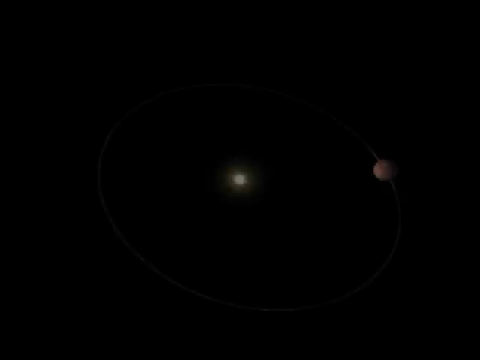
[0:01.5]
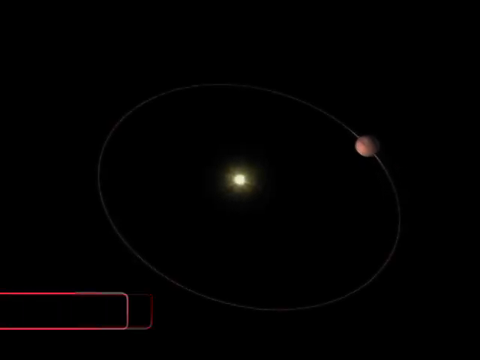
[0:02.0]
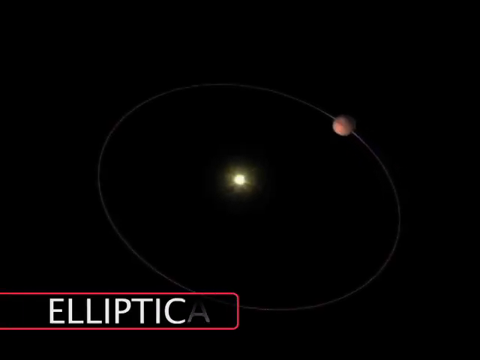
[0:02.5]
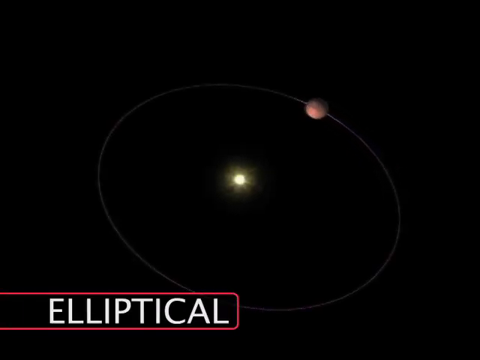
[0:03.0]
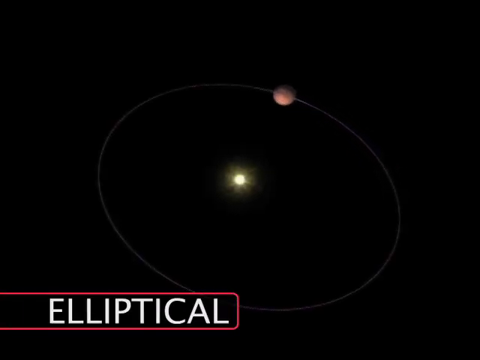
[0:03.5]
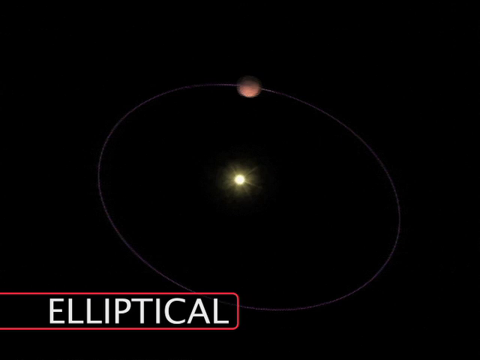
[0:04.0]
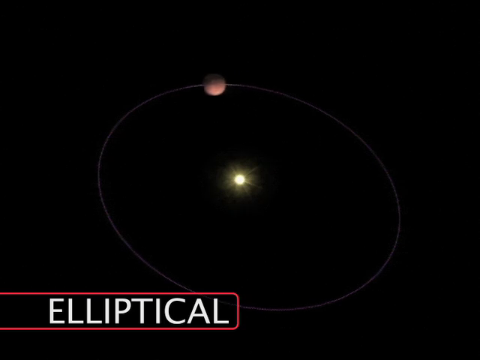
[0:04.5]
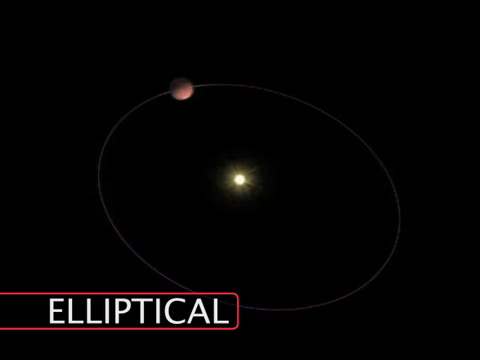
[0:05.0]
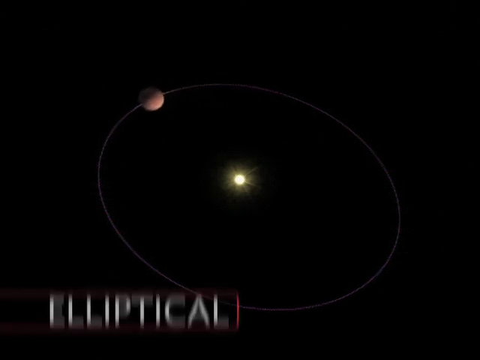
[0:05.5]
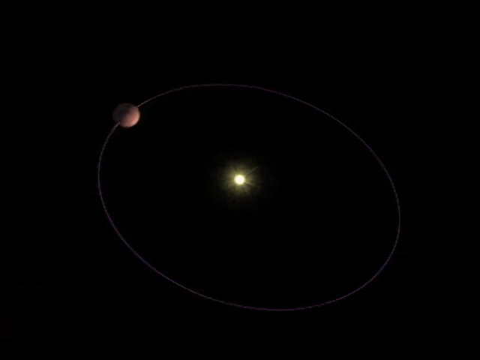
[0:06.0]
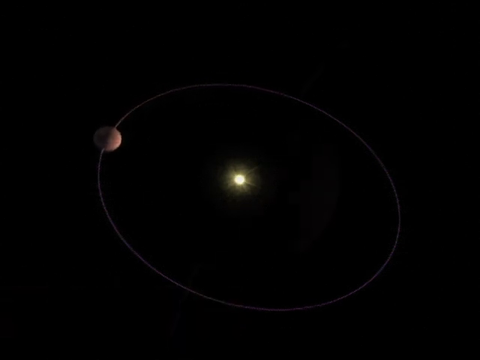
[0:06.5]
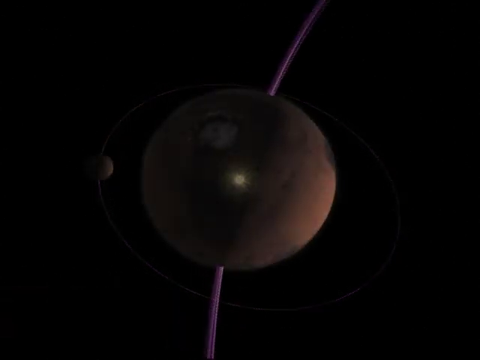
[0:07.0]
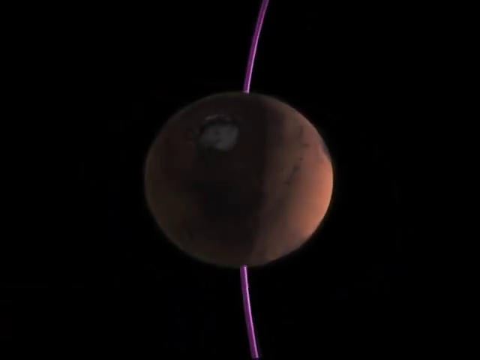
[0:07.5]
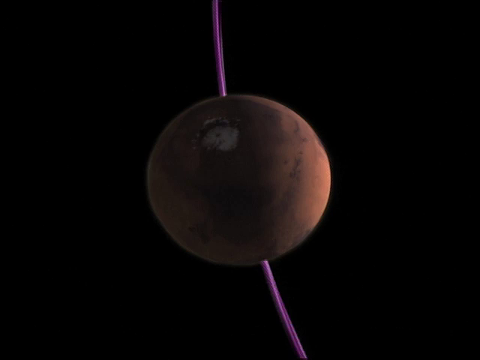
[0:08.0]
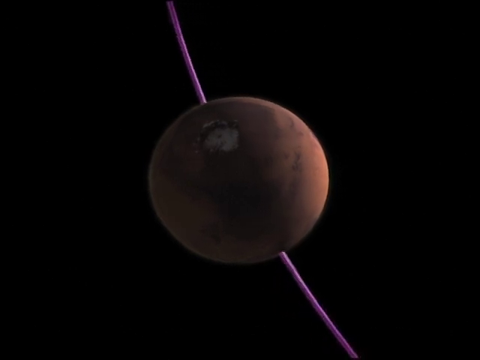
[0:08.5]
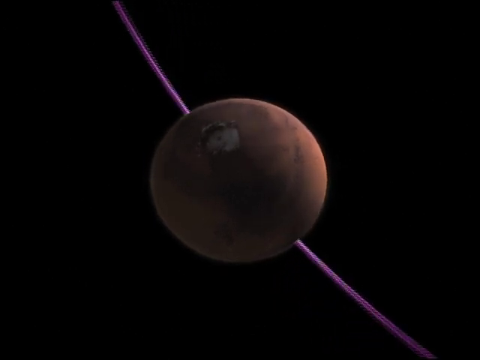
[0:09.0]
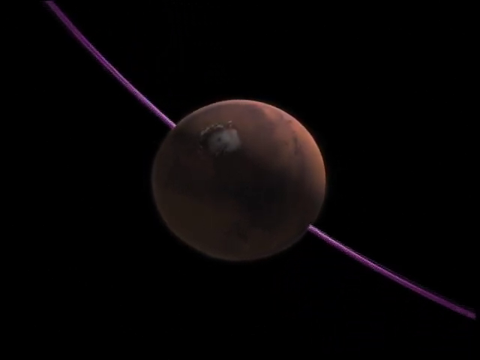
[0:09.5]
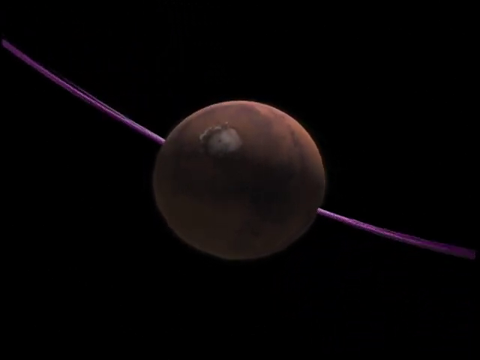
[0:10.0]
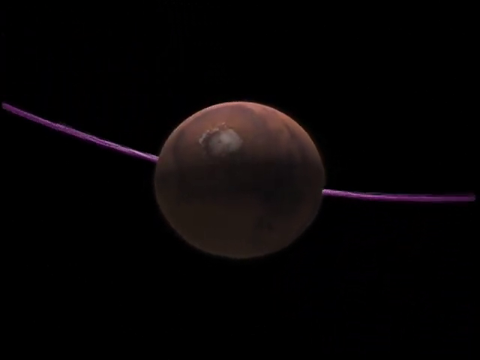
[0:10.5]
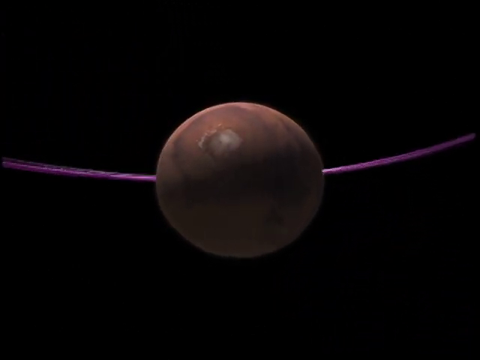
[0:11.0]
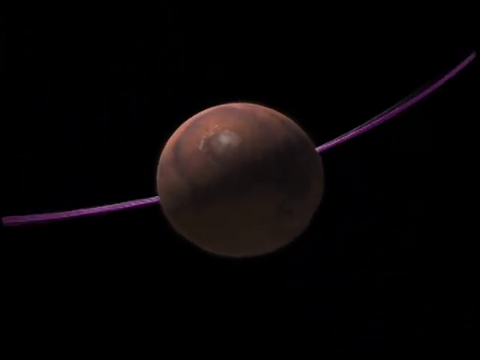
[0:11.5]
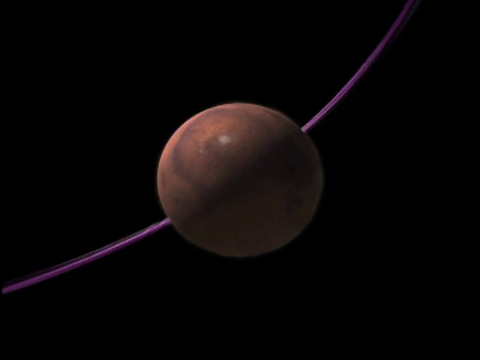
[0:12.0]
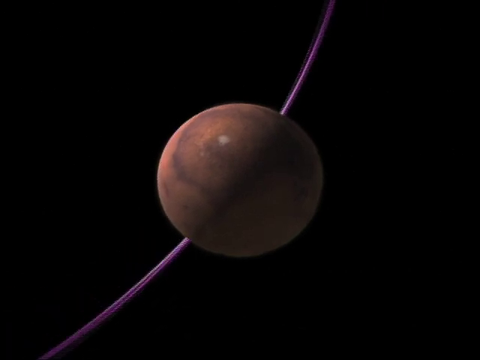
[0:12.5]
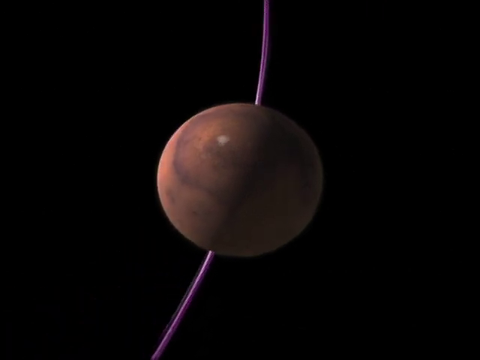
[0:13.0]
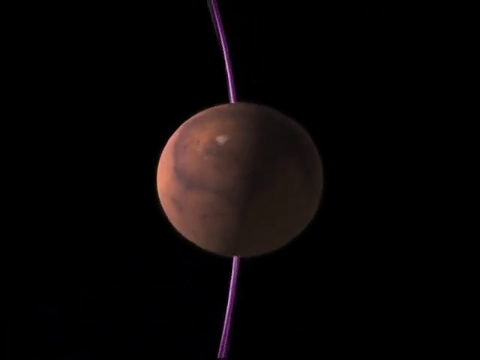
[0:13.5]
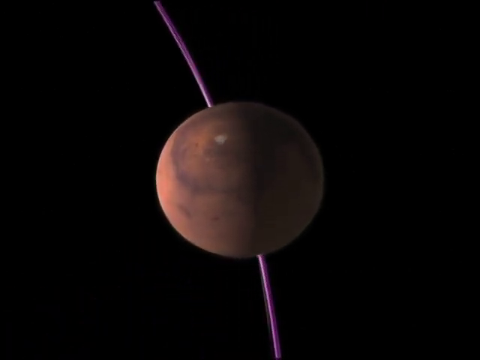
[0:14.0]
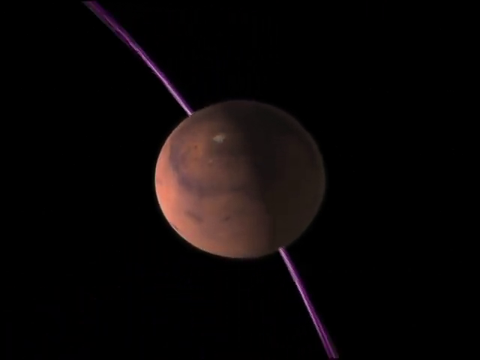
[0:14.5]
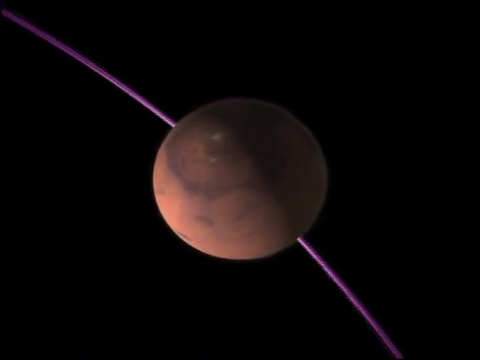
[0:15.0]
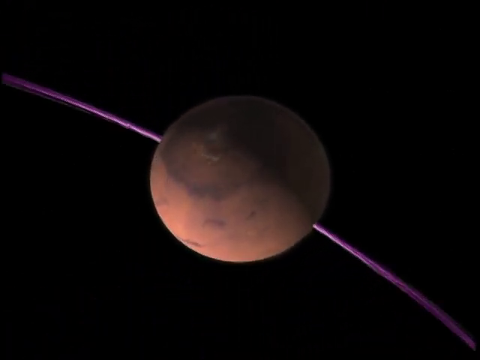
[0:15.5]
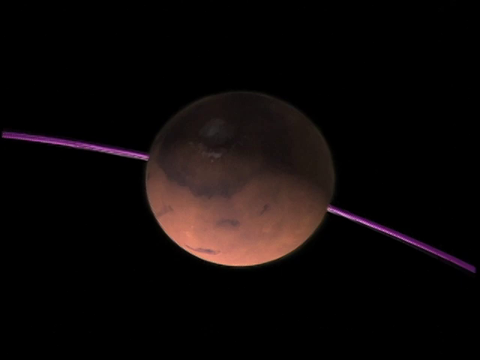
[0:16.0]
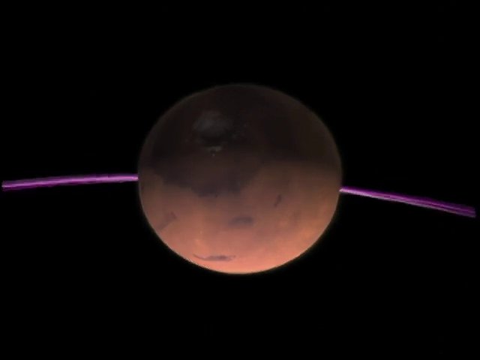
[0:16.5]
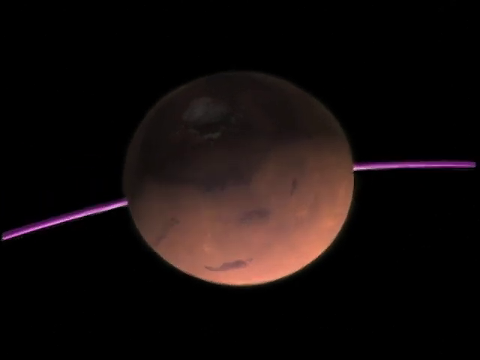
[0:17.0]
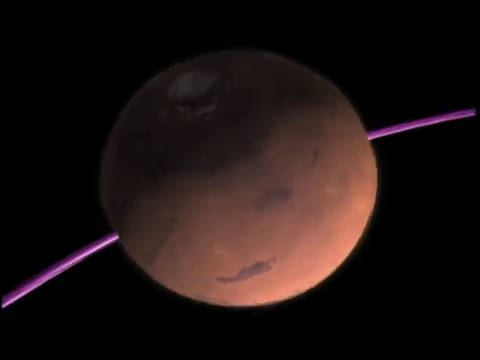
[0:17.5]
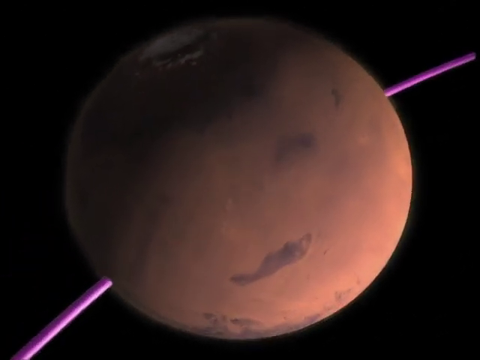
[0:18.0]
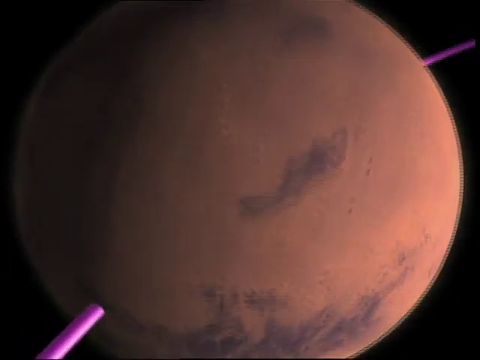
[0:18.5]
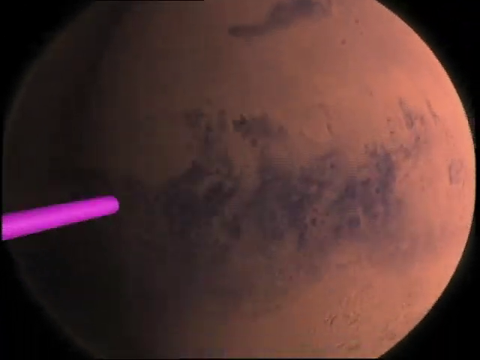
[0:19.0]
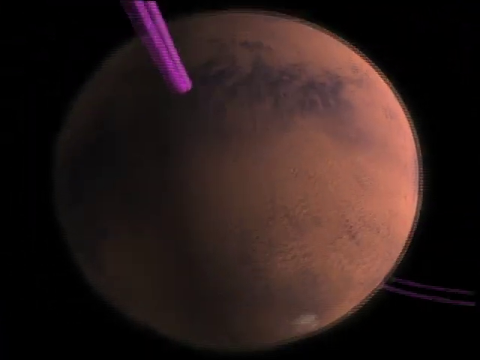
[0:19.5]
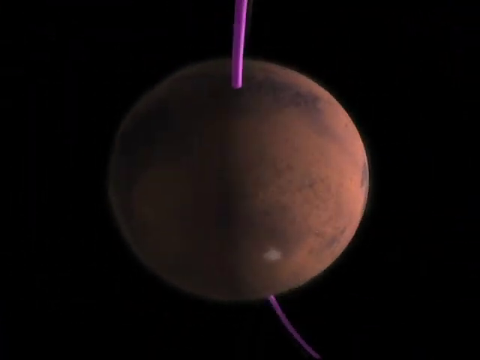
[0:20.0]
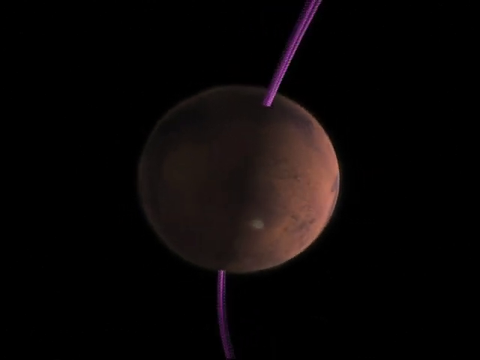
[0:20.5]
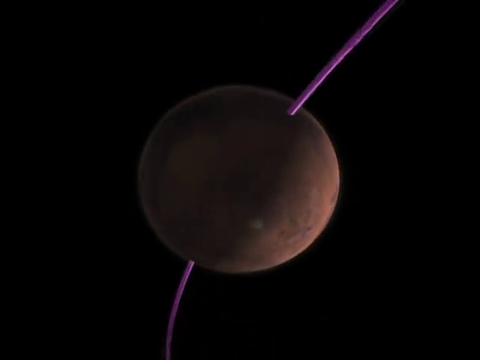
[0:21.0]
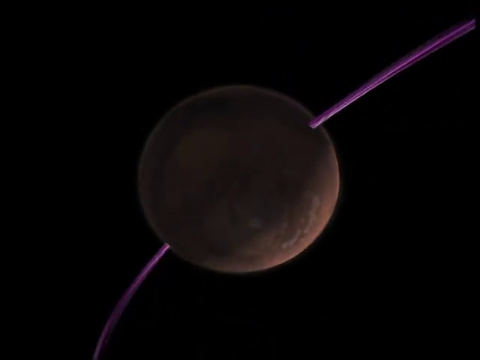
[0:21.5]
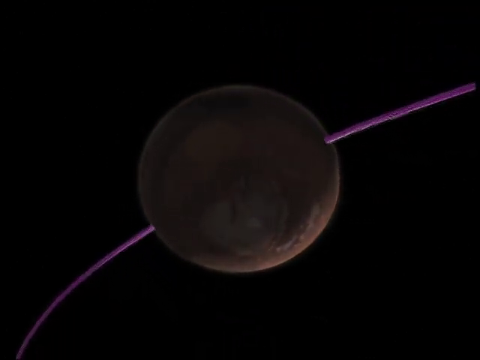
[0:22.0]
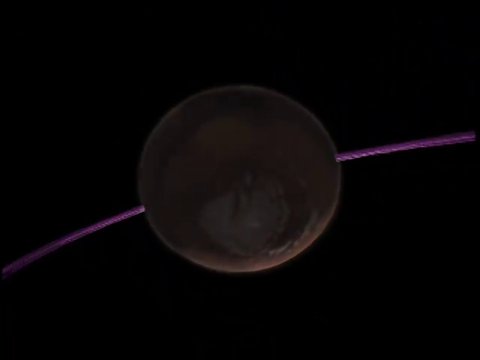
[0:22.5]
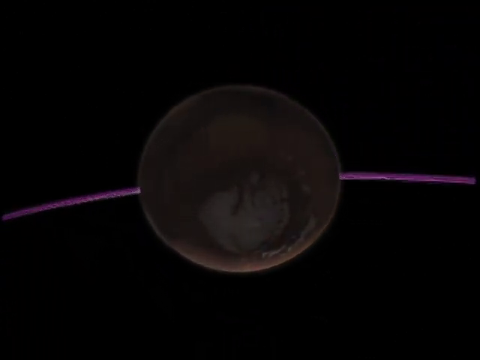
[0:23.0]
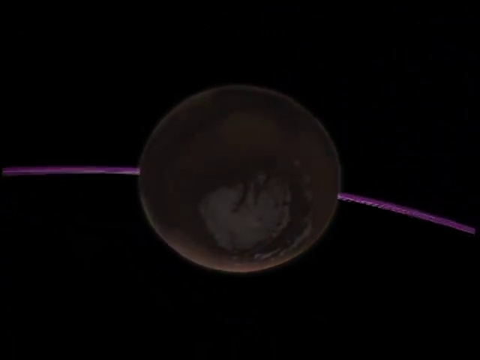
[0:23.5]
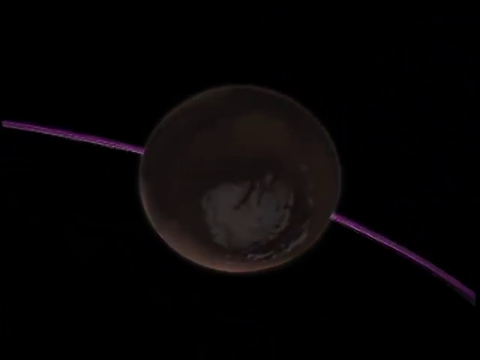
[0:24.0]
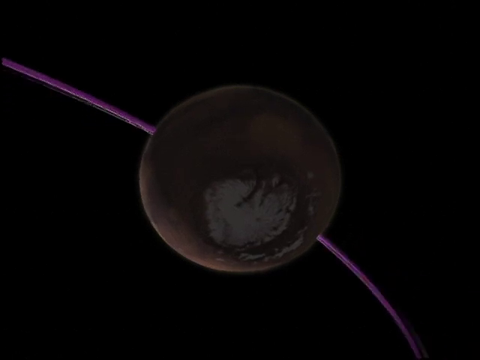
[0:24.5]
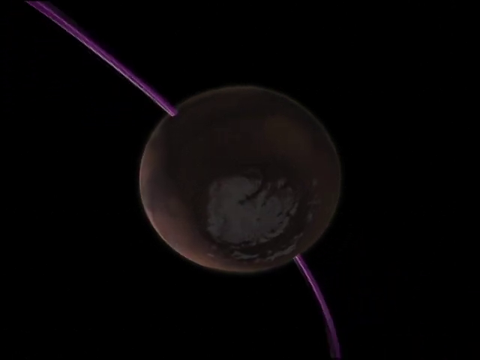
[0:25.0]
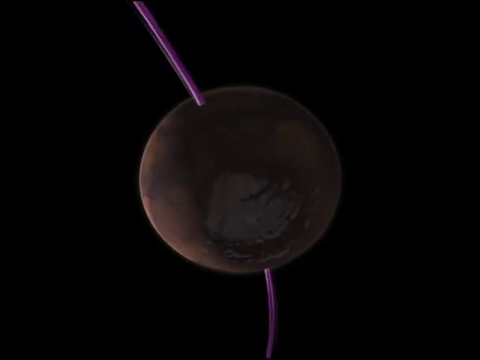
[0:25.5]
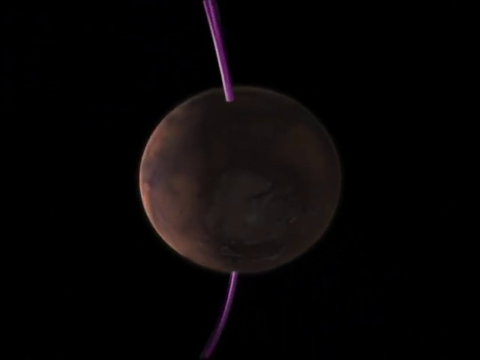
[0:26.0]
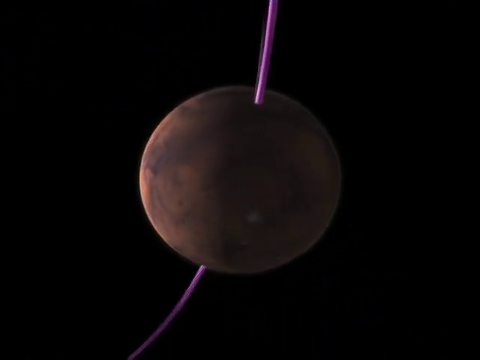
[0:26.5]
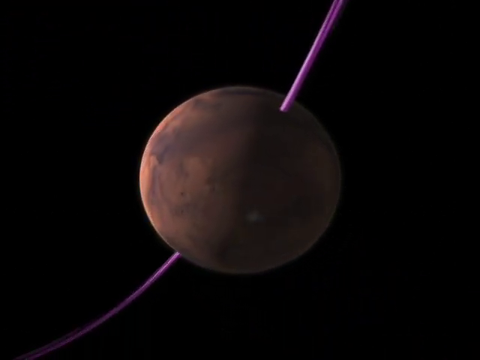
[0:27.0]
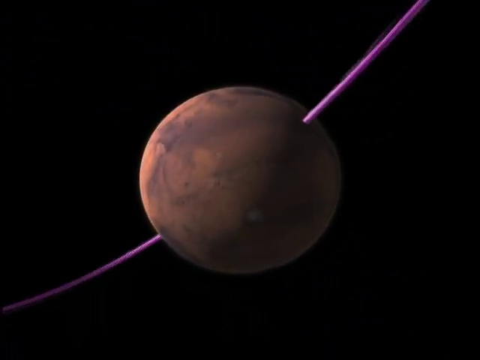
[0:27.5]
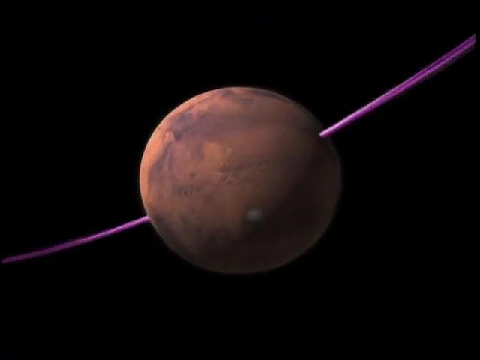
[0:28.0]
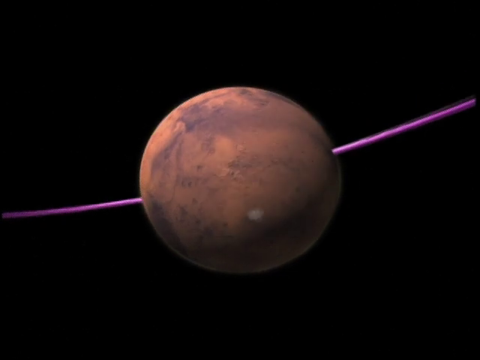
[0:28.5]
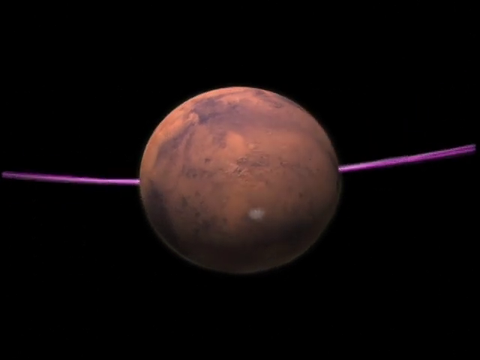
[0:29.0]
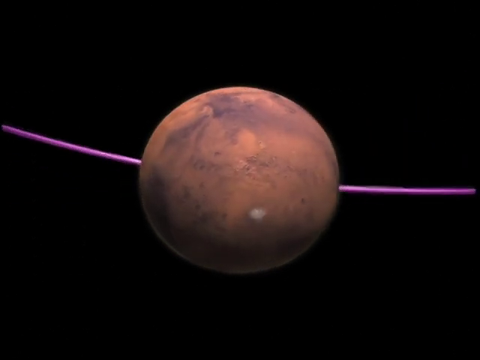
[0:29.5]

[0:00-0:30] An animated illustration shows what looks like a planet revolving around the sun. In the lower left corner, white text surrounded by a red outline reads "elliptical". Against the blackness of space, a shining ball that looks like the sun is in the center of an orbit, and a reddish brown planet revolves on the orbit in an anticlockwise direction. The view moves closer to the planet as it revolves; the sun is no longer visible, and the planet is seen spinning on its orbit. The orbital line is colored a deep violet purple. The camera zooms into the reddish brown planet, which becomes darkened with a shadow as it continues to rotate on its orbit. Some blotchy patches are visible on the planet, so its color is not a smooth red; what the patches are is unclear.